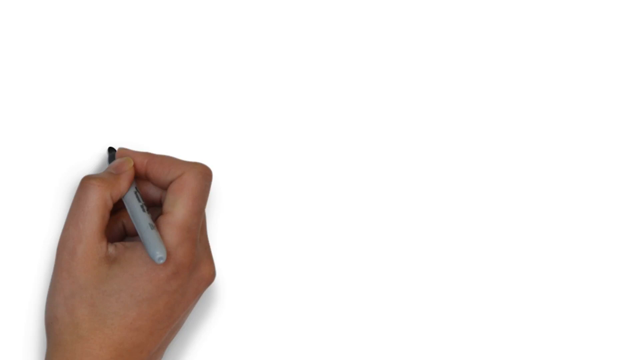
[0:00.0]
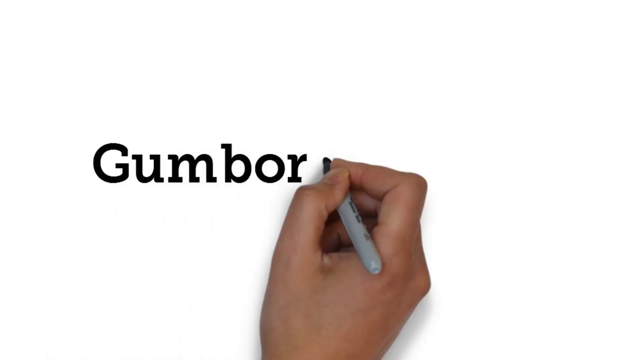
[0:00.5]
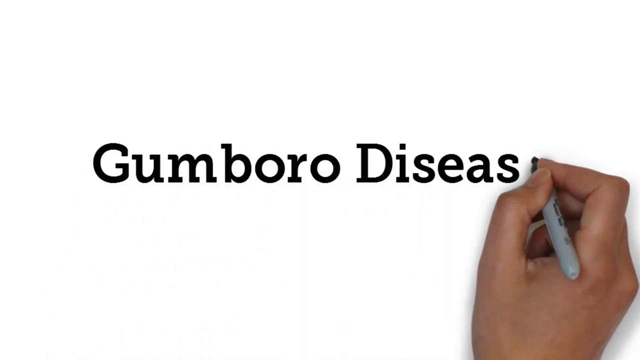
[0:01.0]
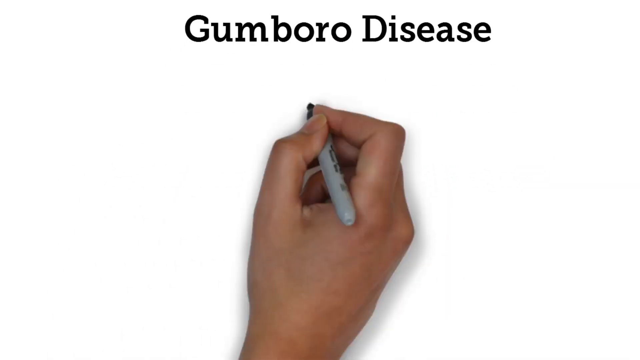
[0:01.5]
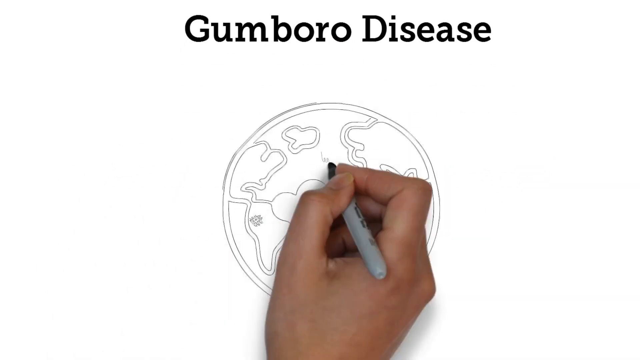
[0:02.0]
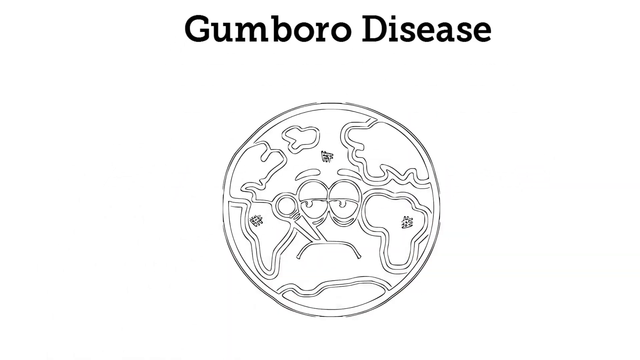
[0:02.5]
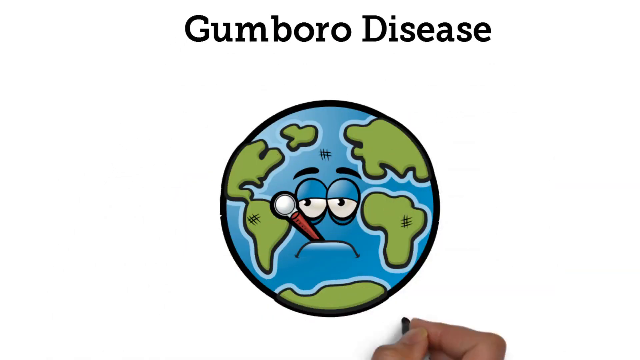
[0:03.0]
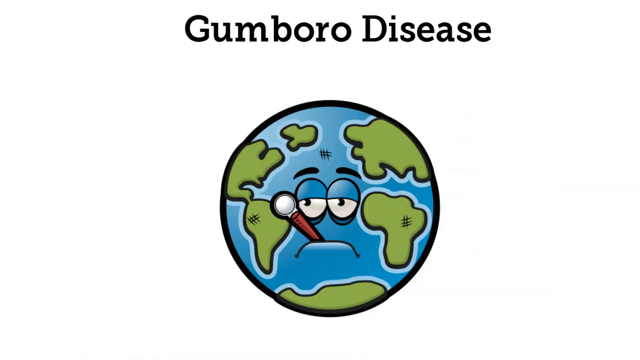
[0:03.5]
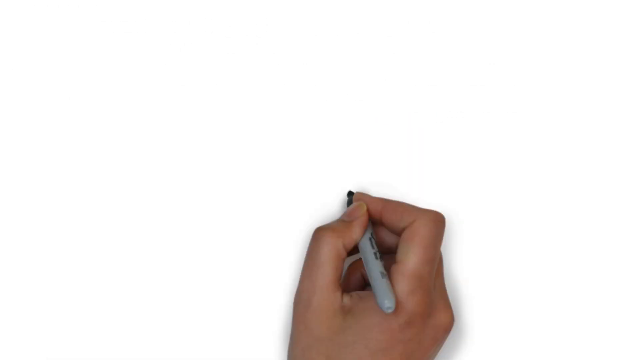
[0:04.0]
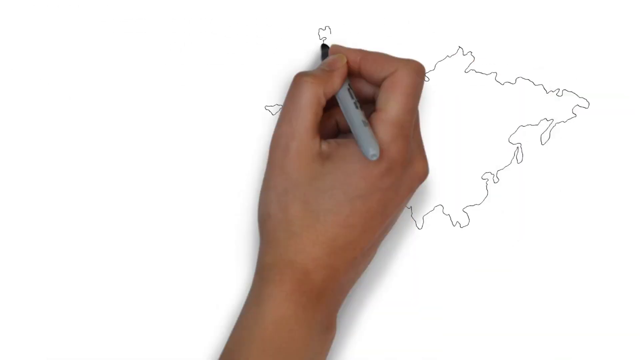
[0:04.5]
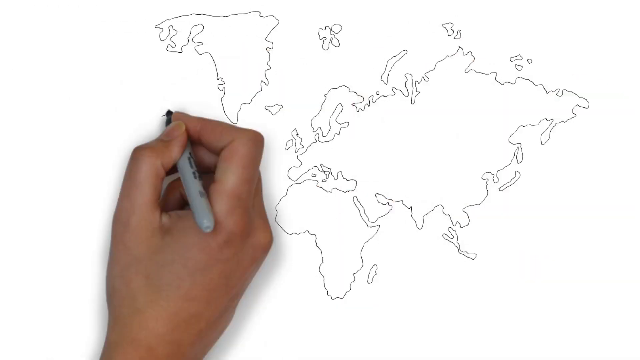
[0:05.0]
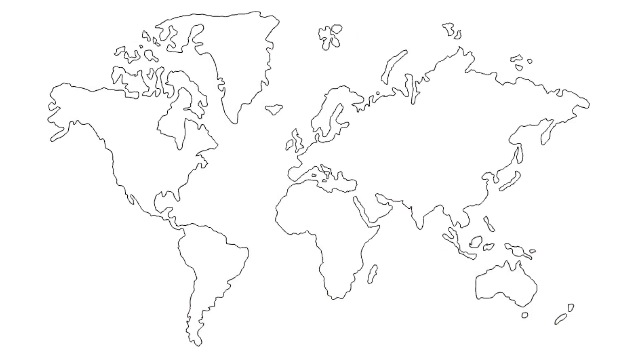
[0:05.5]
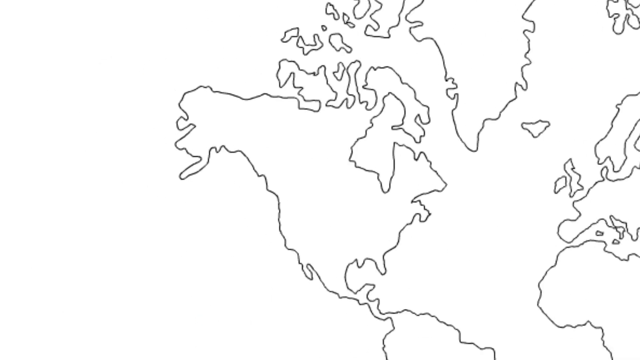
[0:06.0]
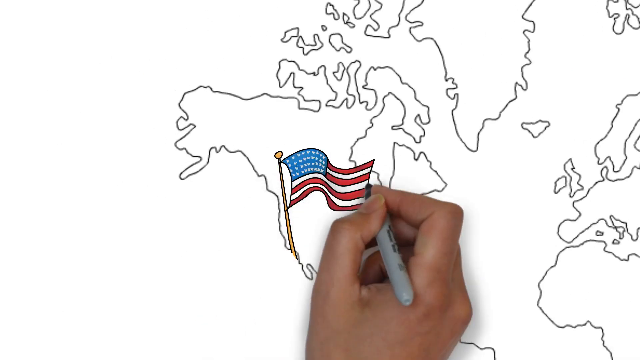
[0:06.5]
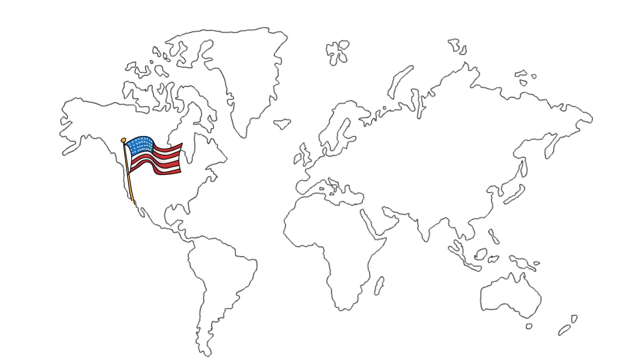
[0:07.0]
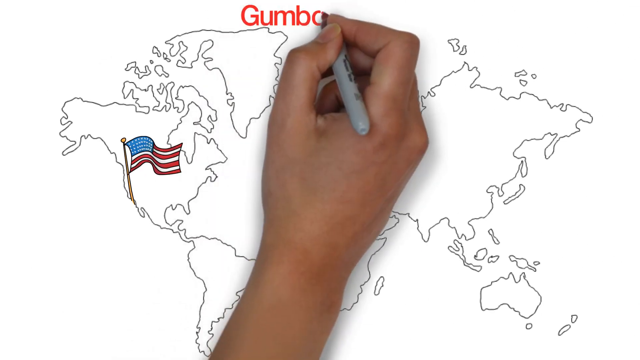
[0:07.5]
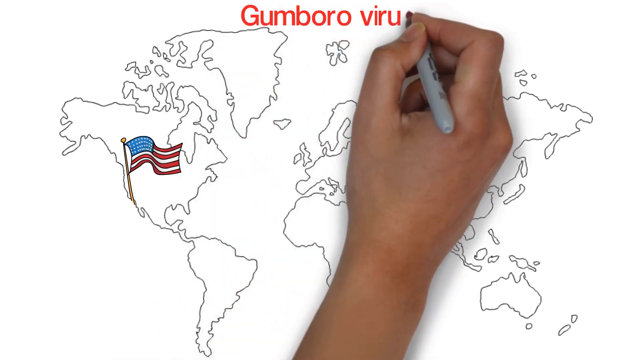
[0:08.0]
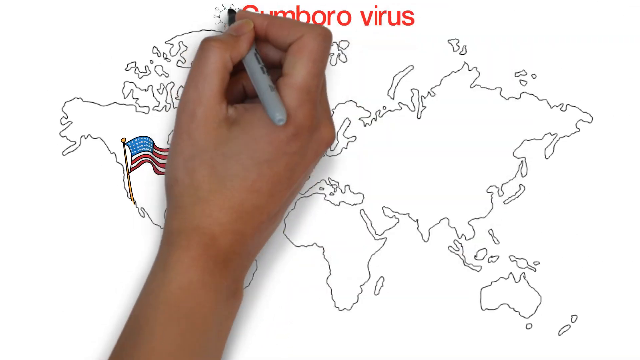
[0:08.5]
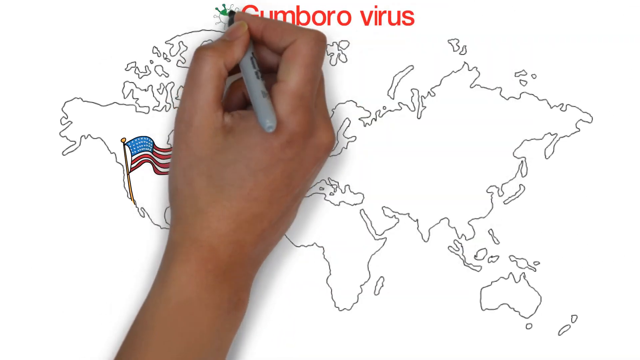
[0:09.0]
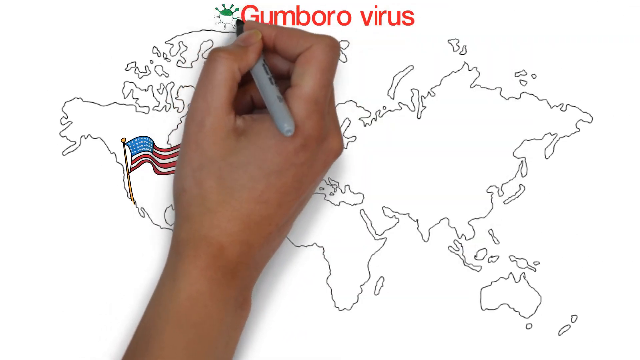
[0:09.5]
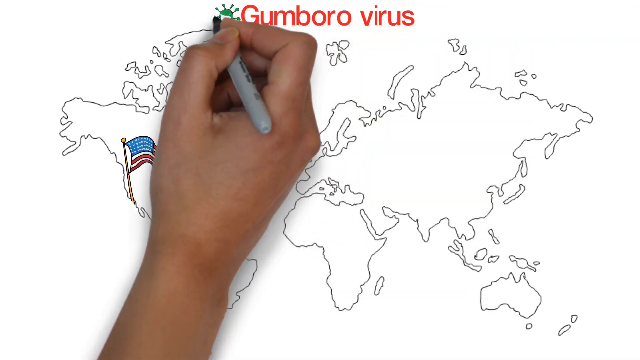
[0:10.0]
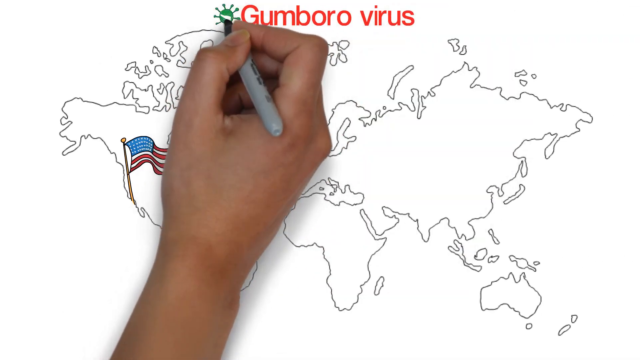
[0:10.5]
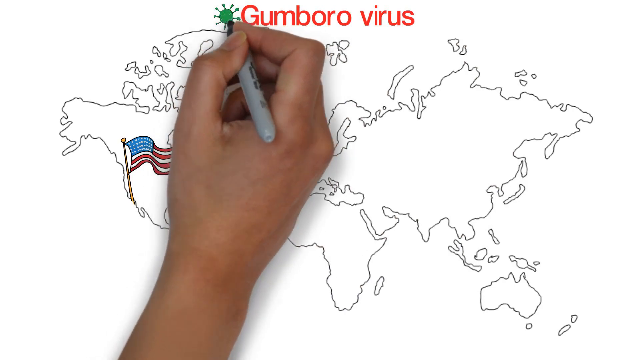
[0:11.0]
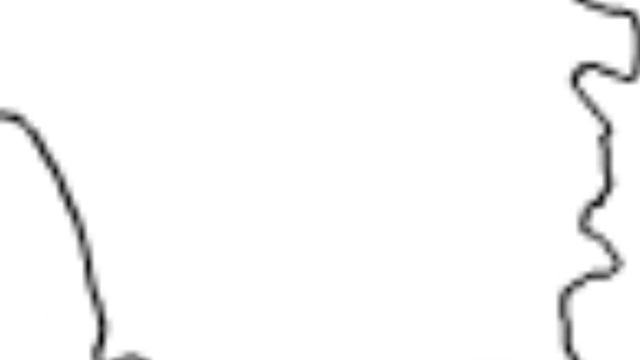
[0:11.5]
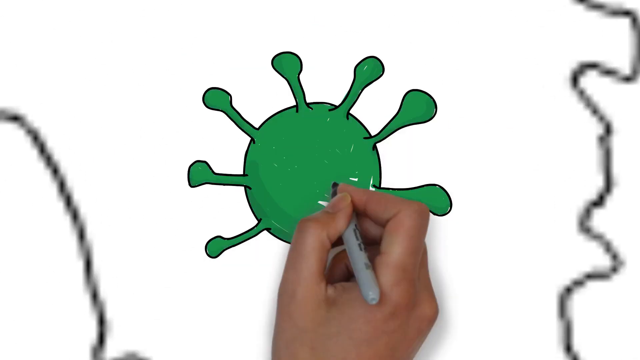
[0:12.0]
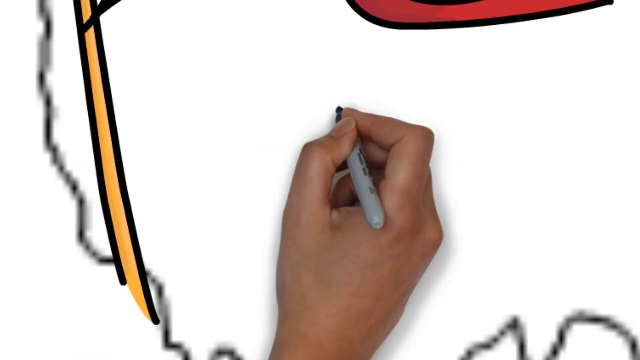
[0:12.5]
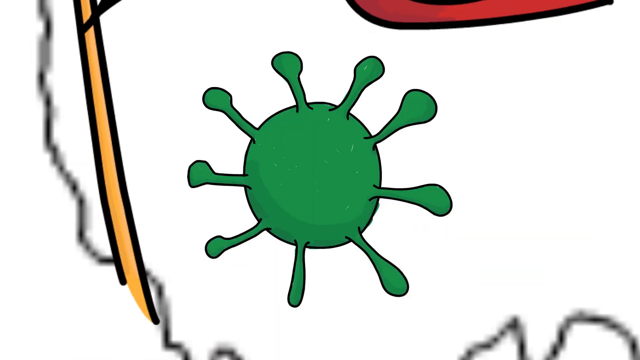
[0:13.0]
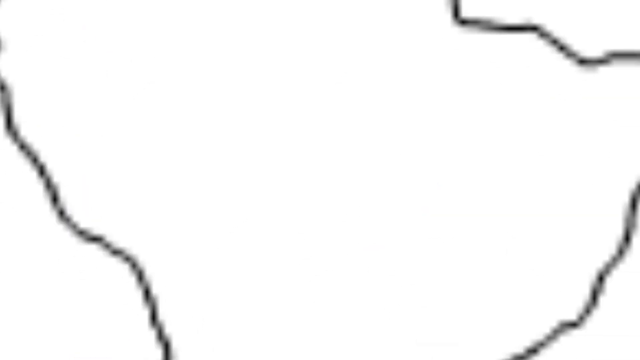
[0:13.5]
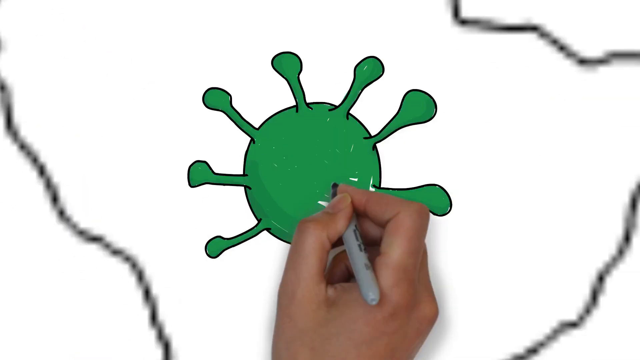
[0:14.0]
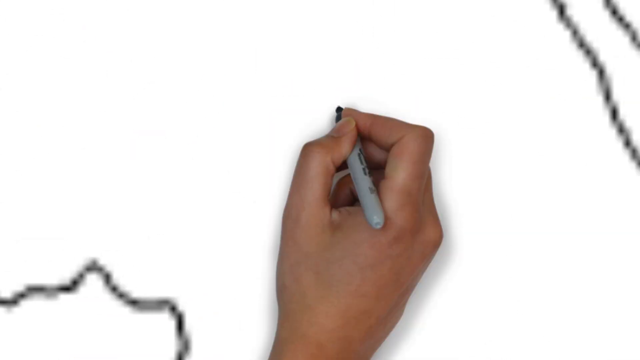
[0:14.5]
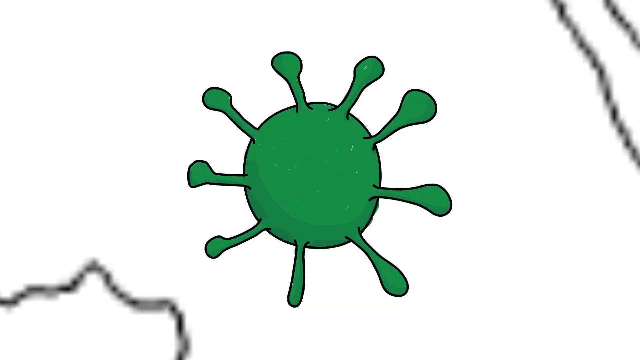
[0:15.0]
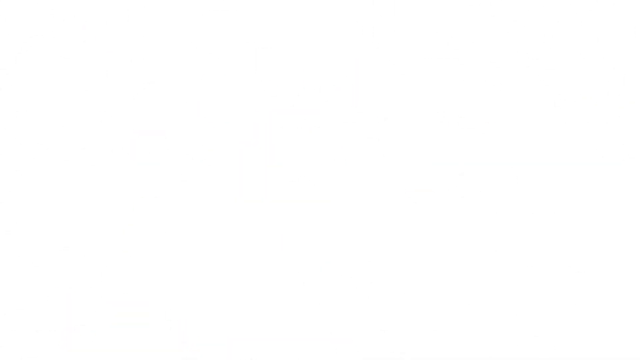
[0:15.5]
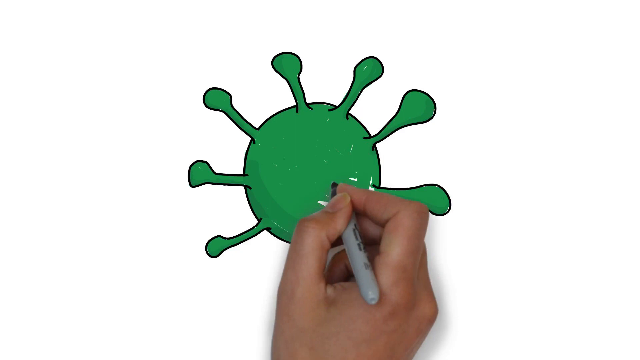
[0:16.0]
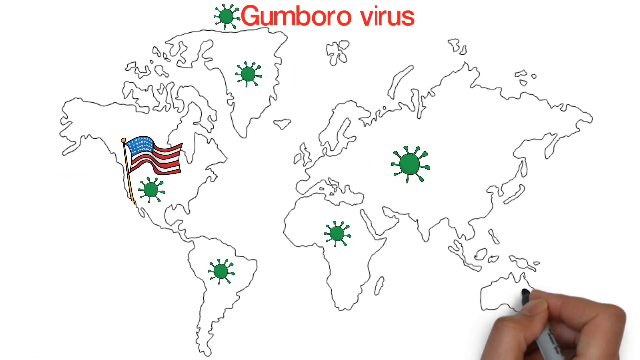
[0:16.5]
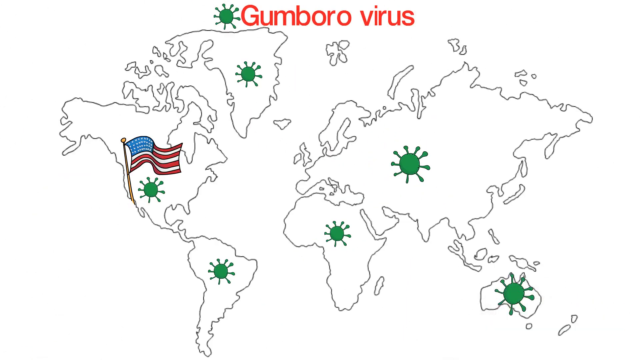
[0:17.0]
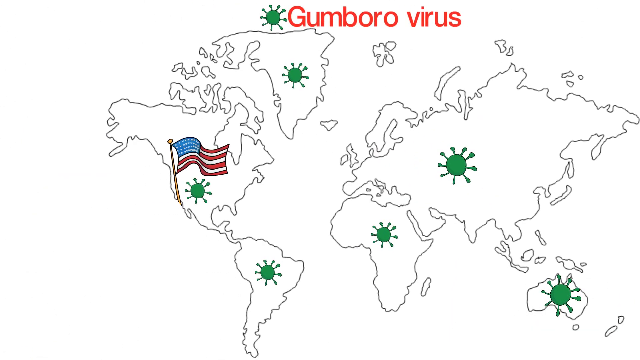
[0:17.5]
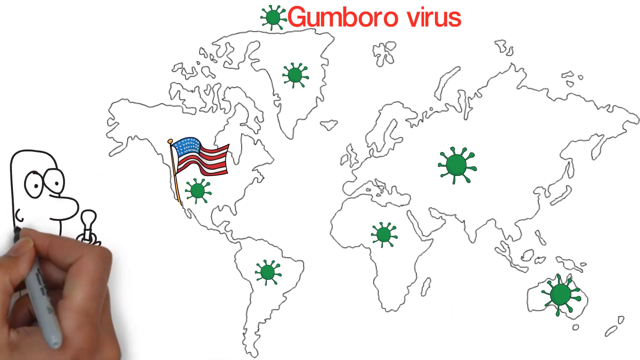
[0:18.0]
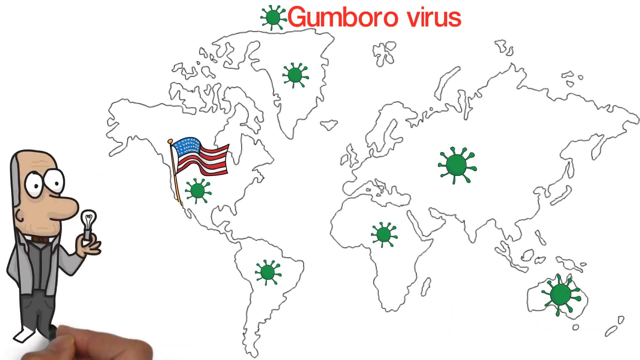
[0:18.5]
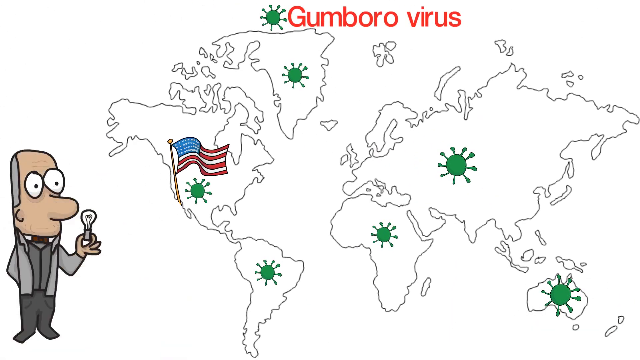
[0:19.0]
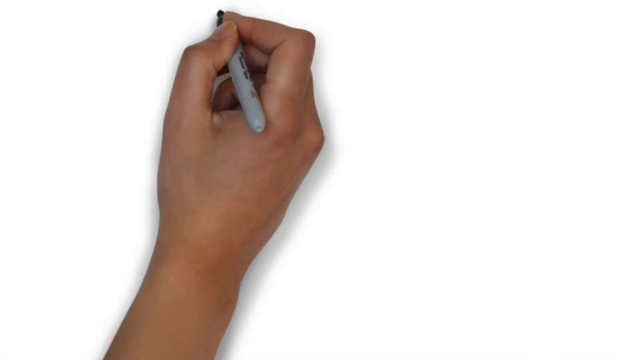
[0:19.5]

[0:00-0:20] A hand holds a gray and black sharpie marker, and the words "Gumboro Disease" are written in black ink, large in the center of the screen. The words move off the screen, revealing a cartoon image of the world colored green and blue. At the center of the globe is a sad face that looks more like a sick face, holding a thermometer. The scene then moves to a drawing of the entire world, almost like a flat atlas. Emphasis is placed on North America, where a U.S. flag with red and white stripes is drawn, looking as if it is waving. Next, "Gumboro virus" is written in red at the top, and images of green viruses appear across the map in North America and all the other continents. A cartoon man with a receding hairline, wearing a gray suit and holding a light bulb, is shown. Then the words "as world" begin to be written.